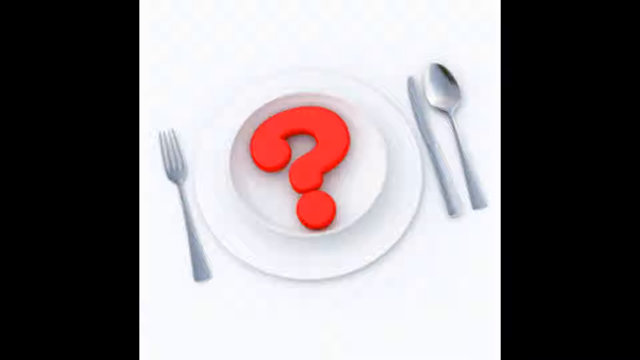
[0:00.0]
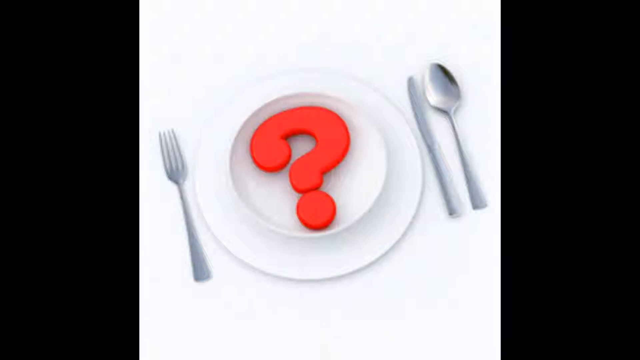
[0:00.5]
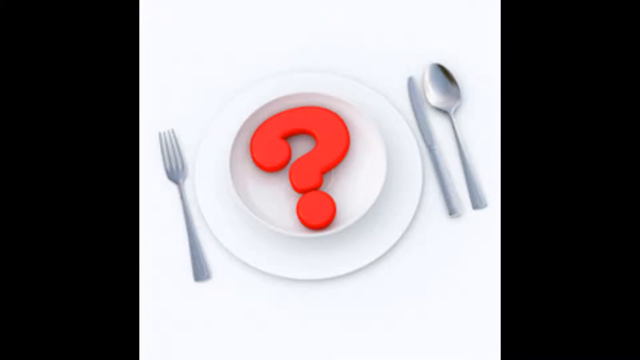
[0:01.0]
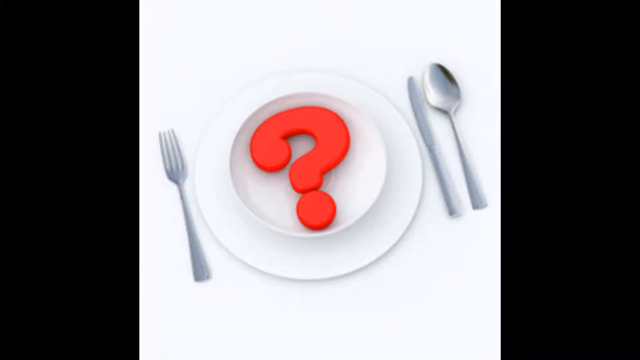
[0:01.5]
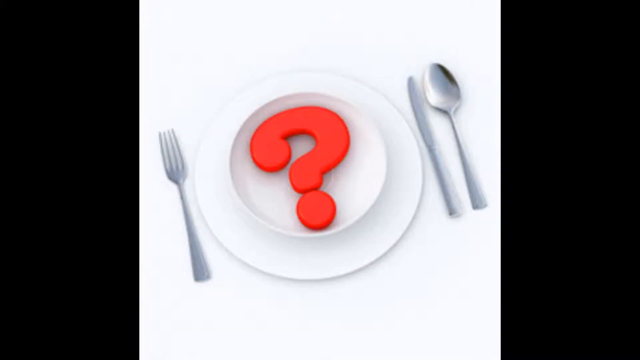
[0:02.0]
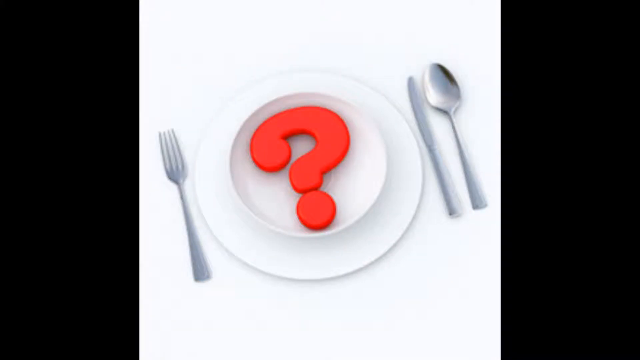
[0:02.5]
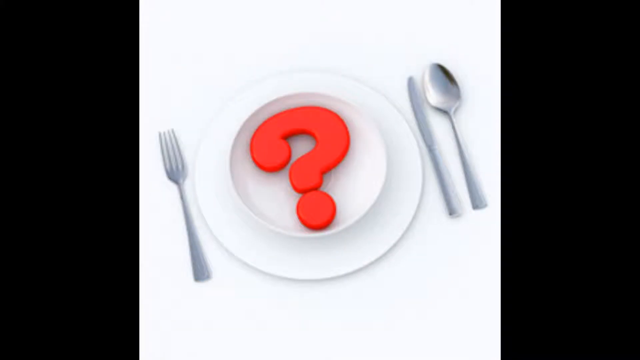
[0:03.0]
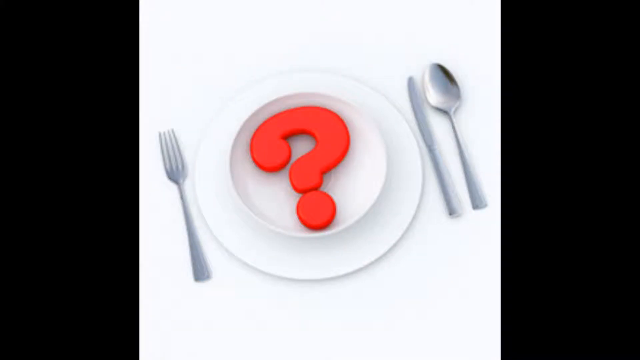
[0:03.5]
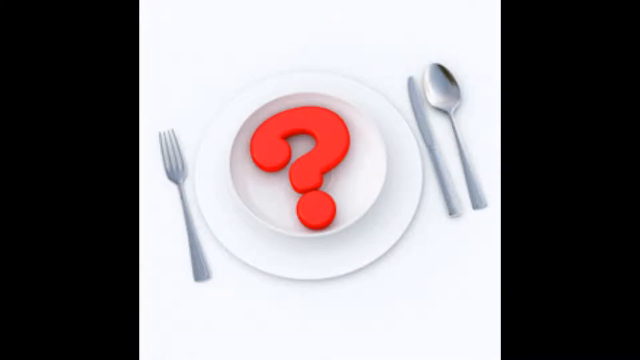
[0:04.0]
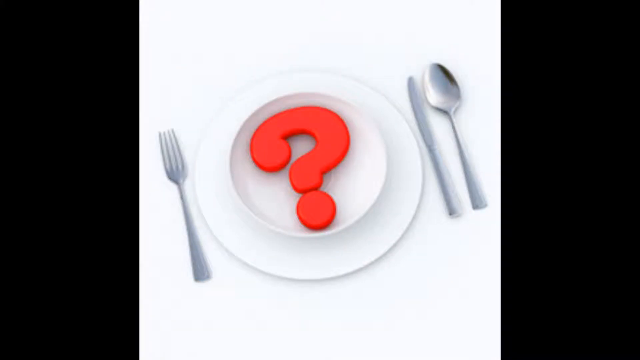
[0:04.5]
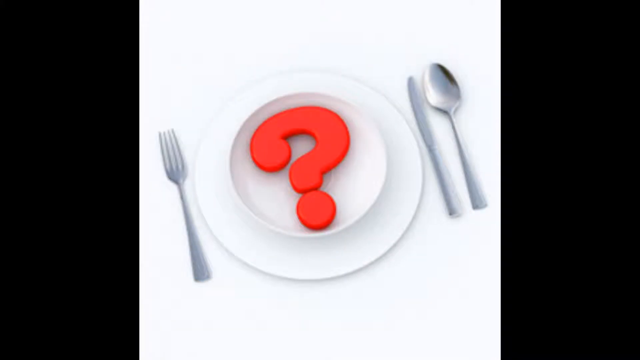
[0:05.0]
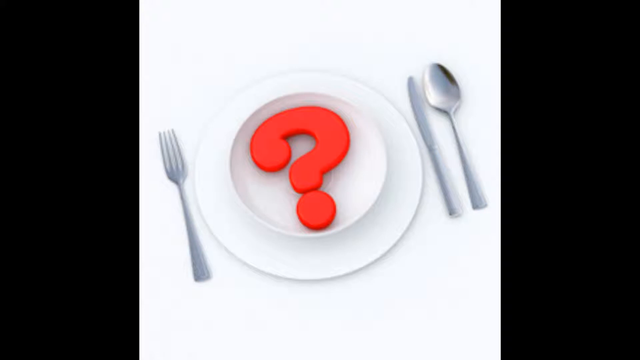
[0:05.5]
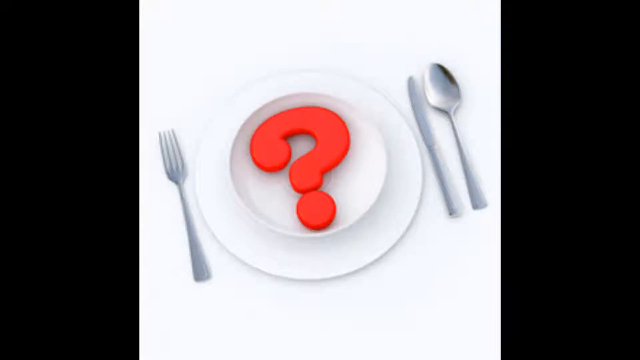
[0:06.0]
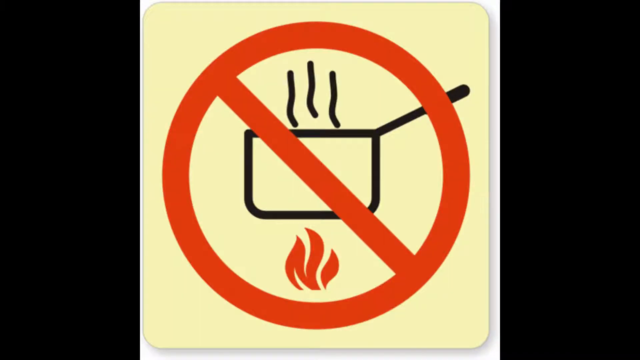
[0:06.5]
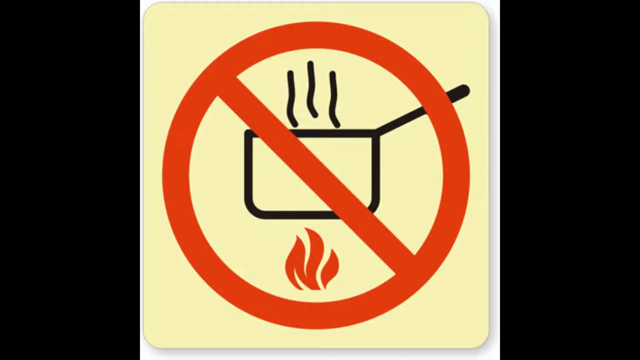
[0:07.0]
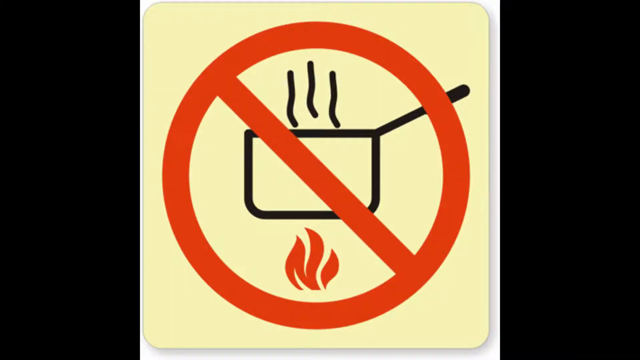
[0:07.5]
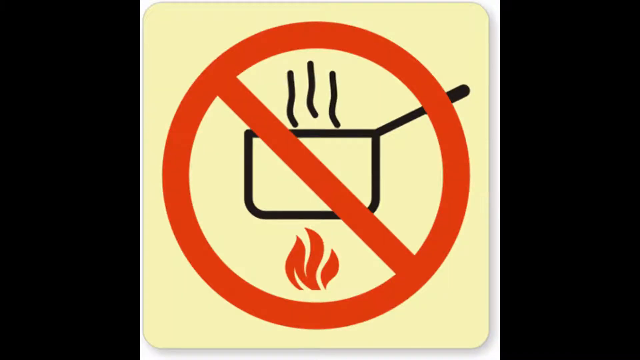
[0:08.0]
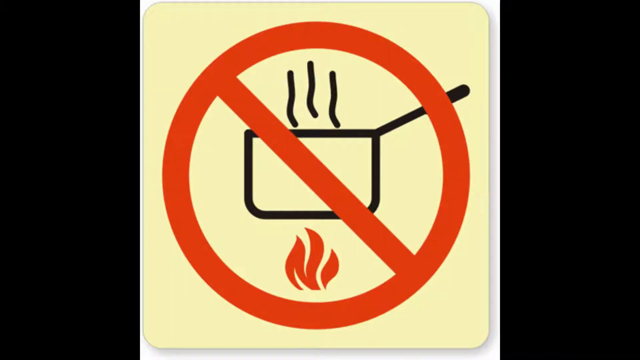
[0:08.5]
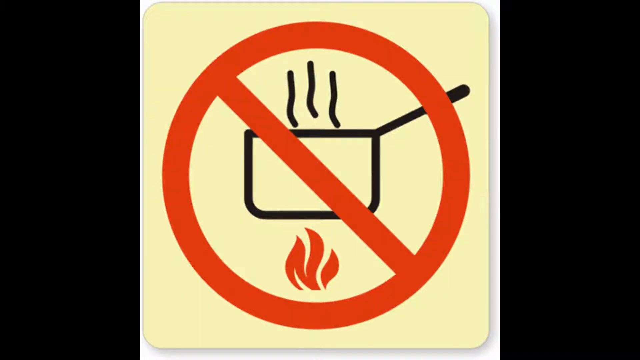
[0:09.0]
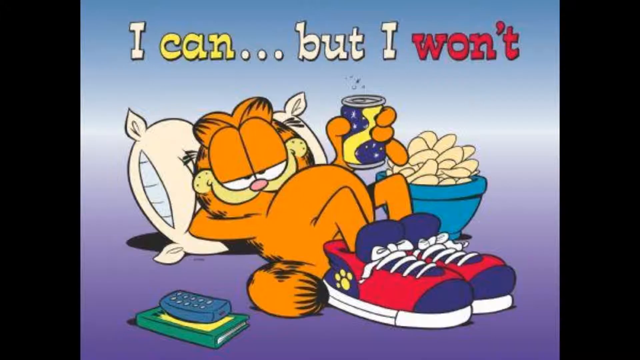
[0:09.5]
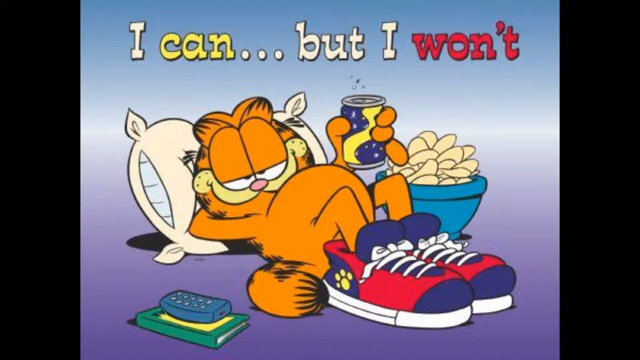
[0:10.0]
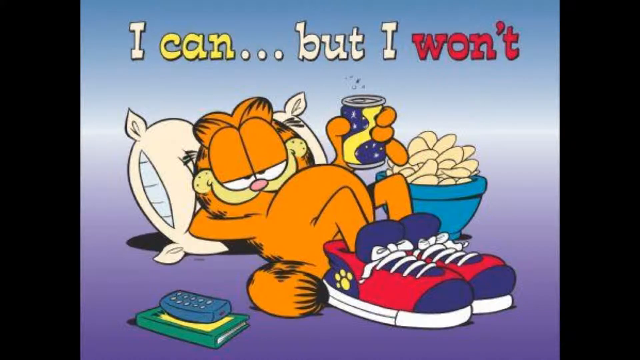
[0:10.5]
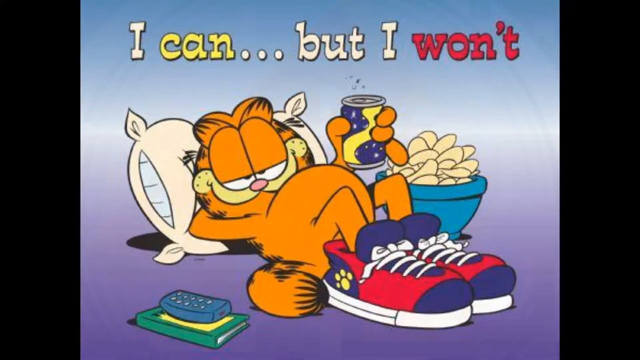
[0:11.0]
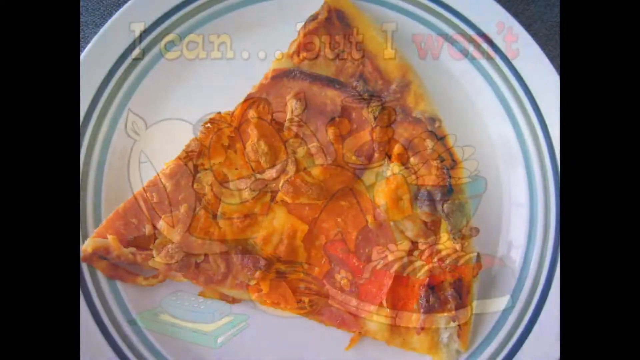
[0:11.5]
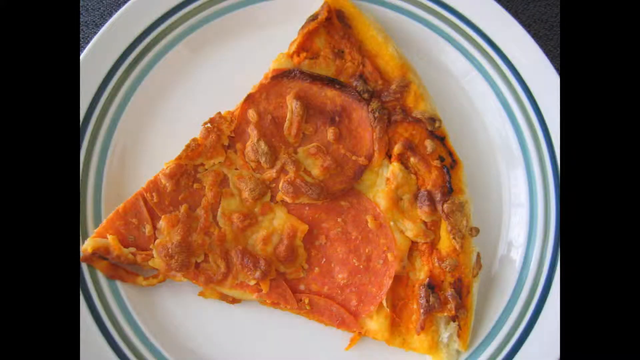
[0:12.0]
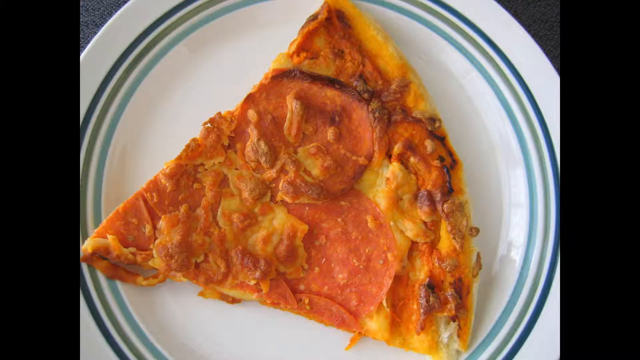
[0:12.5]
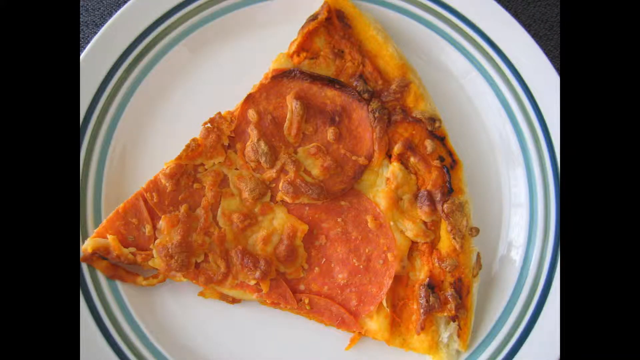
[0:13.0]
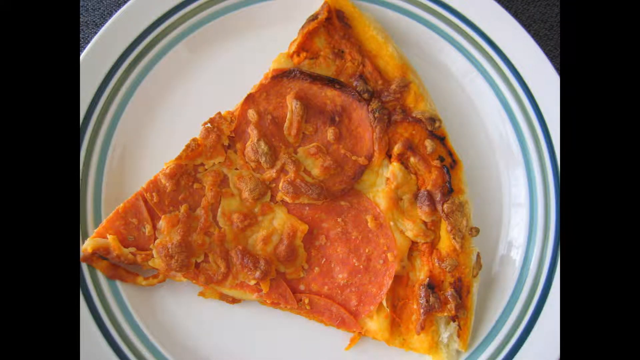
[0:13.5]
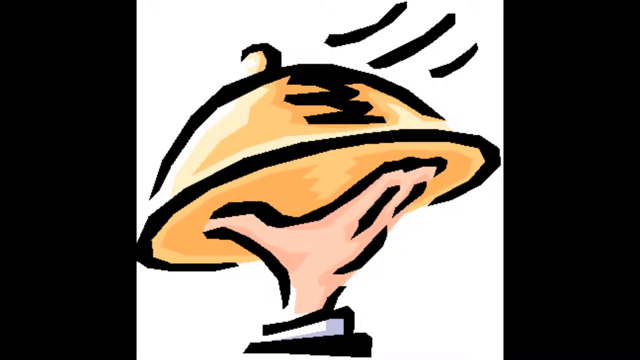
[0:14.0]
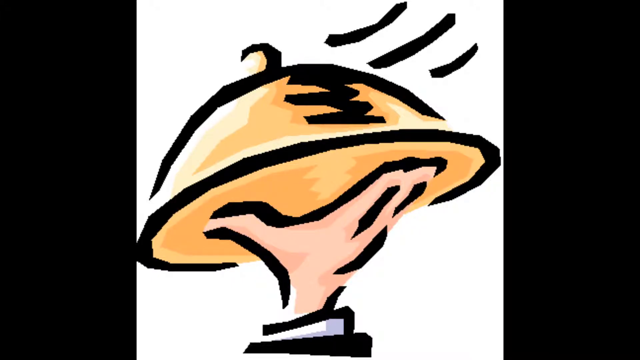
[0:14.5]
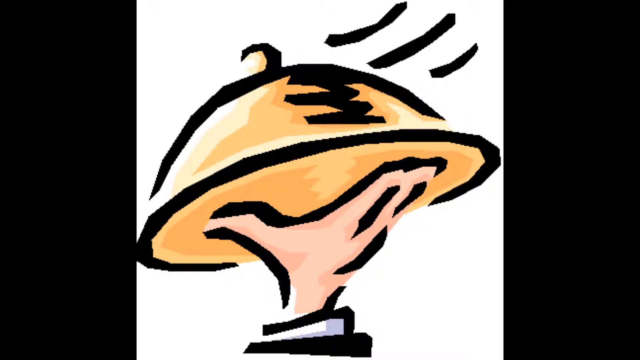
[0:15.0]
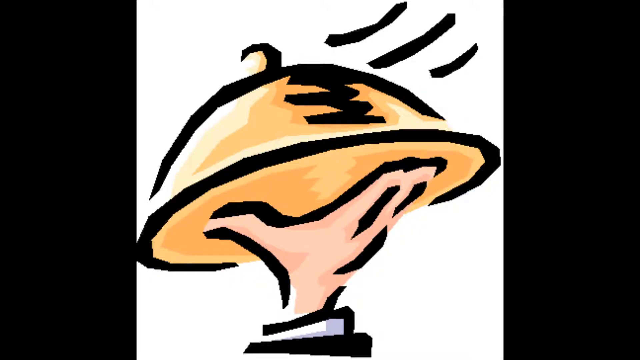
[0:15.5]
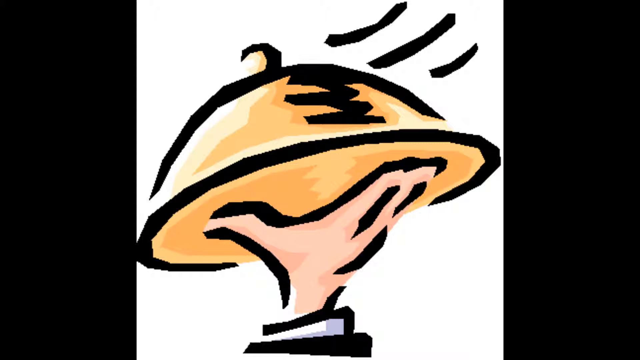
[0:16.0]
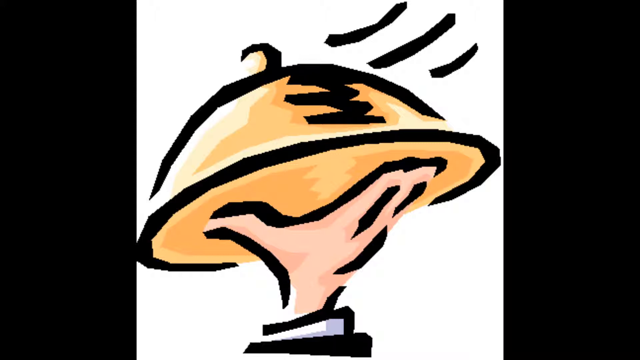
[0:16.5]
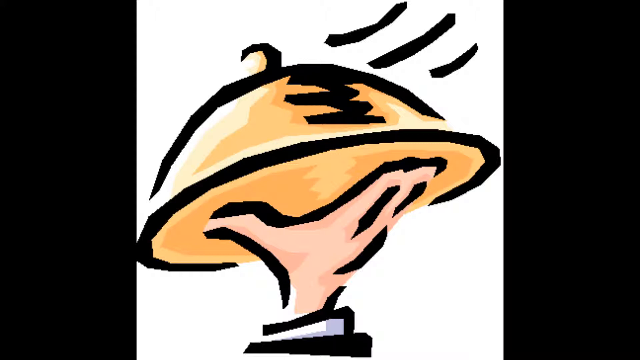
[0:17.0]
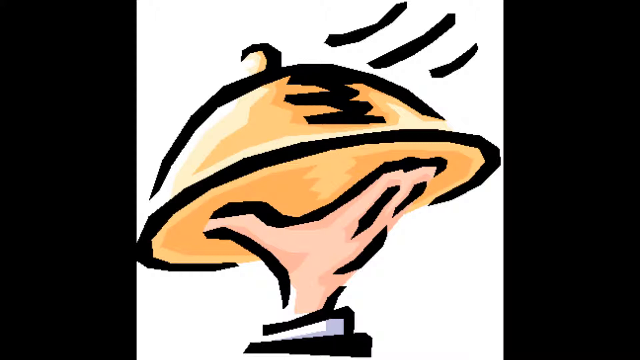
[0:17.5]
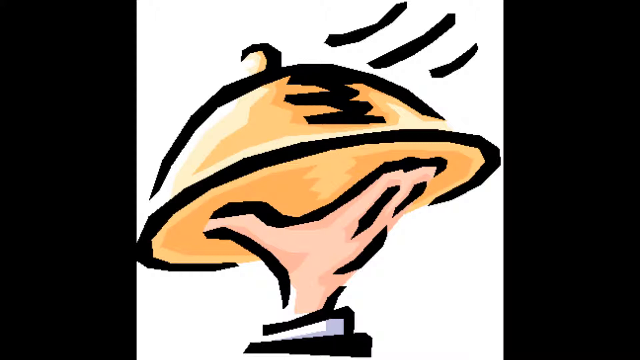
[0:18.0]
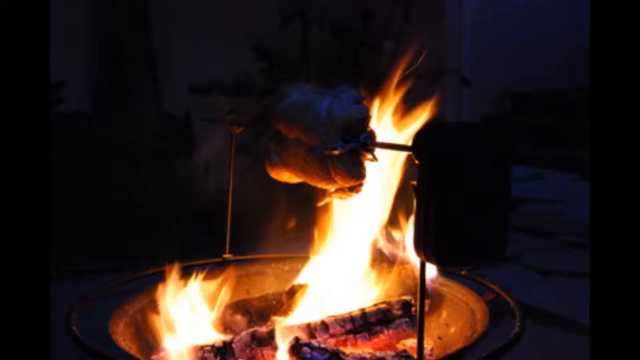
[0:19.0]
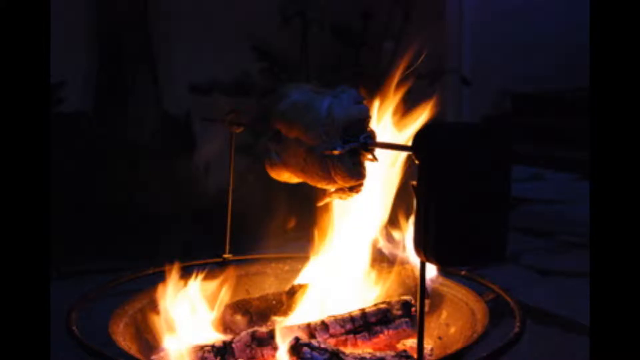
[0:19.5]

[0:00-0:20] A fork, a butter knife and a spoon appear, with a plate in the middle bearing a red question mark. Next comes a warning symbol about fire, and something boiling in a pan. A picture of Garfield follows: he is lying back on a pillow, smiling, wearing a pair of sneakers, in a very relaxed sitting pose. A bowl of chips and a remote control are next to him, and he is holding a soda. He is saying, "I can, but I won't." Then comes a picture of what looks like a very dry slice of pizza, followed by a cartoon waiter holding a serving platter. The video cuts to a chicken on a spit being cooked over an open fire.